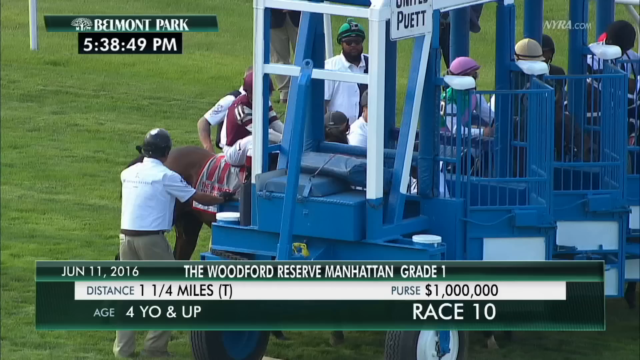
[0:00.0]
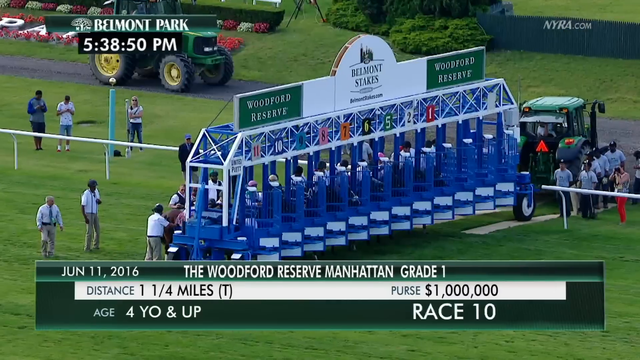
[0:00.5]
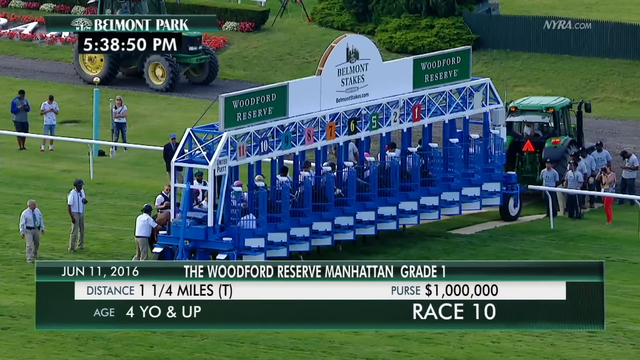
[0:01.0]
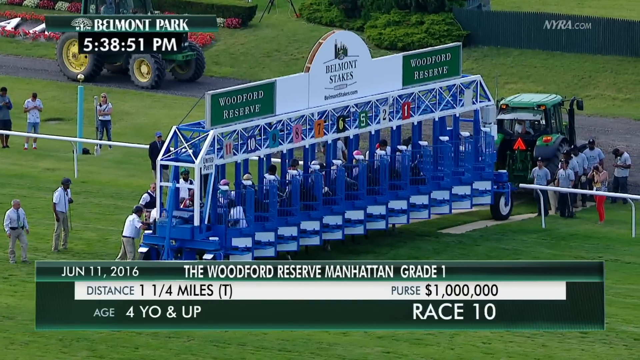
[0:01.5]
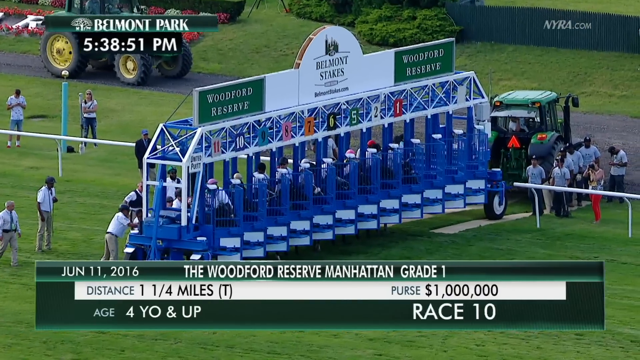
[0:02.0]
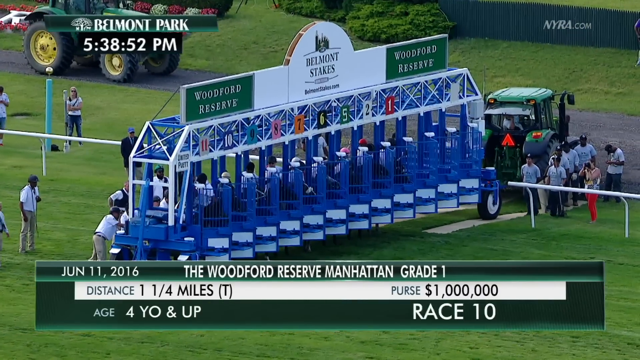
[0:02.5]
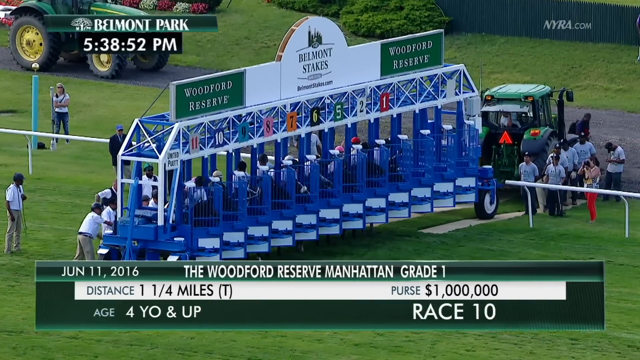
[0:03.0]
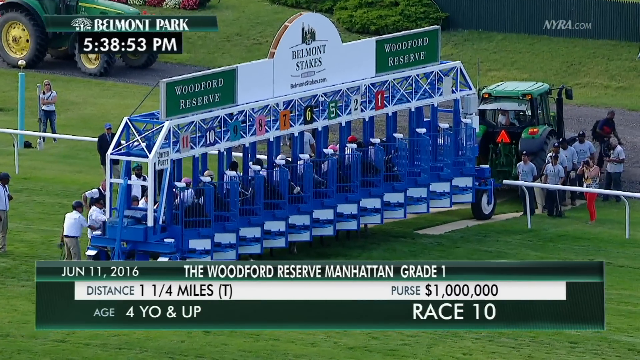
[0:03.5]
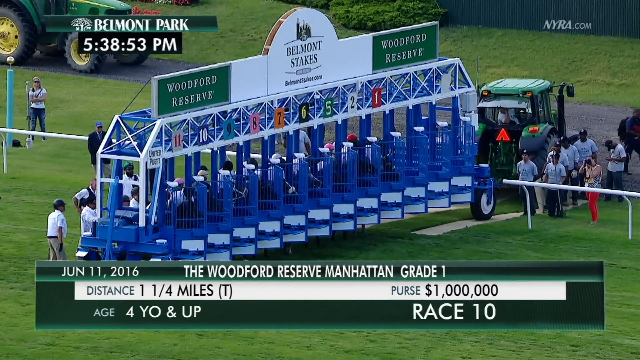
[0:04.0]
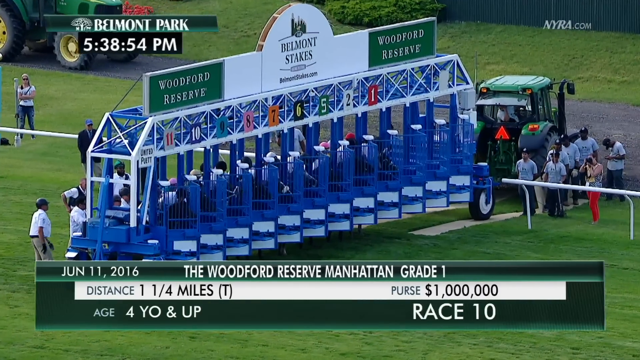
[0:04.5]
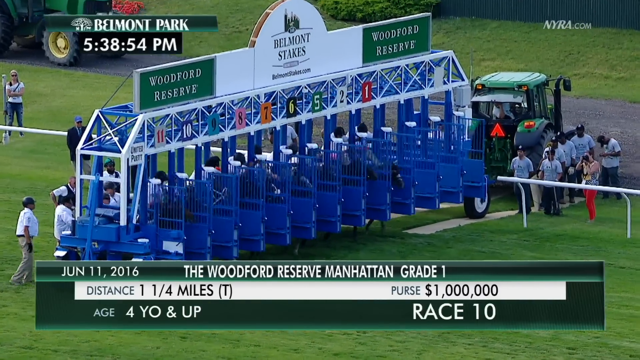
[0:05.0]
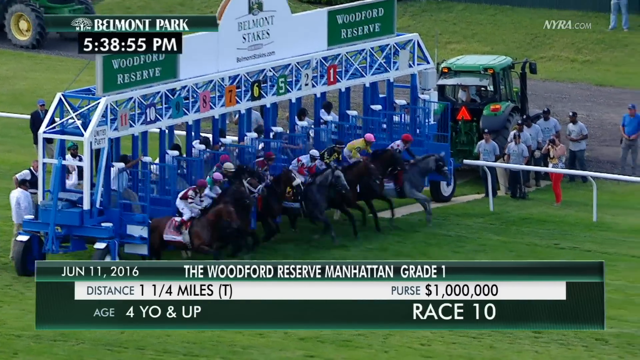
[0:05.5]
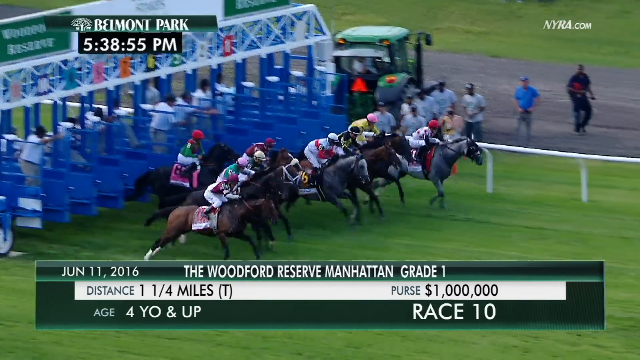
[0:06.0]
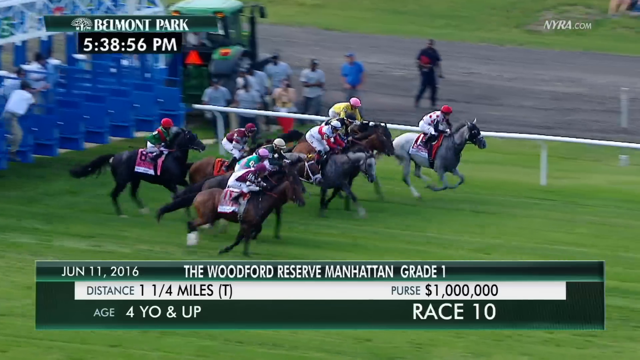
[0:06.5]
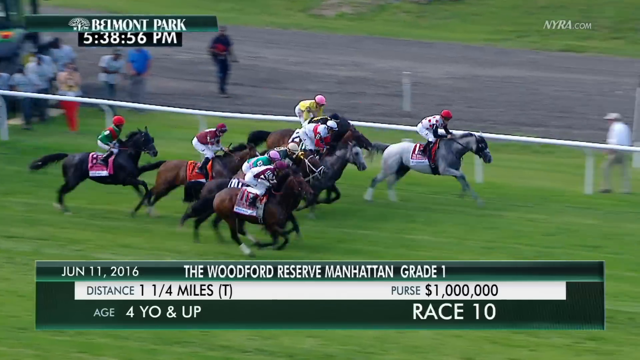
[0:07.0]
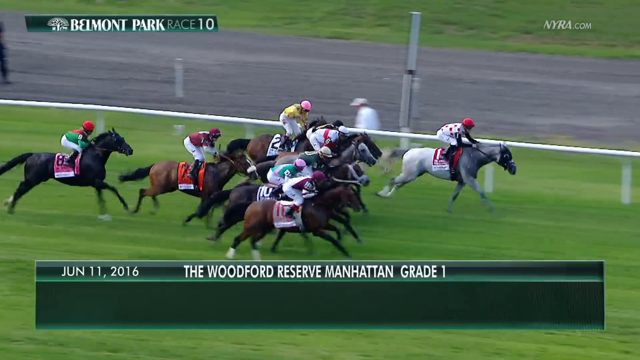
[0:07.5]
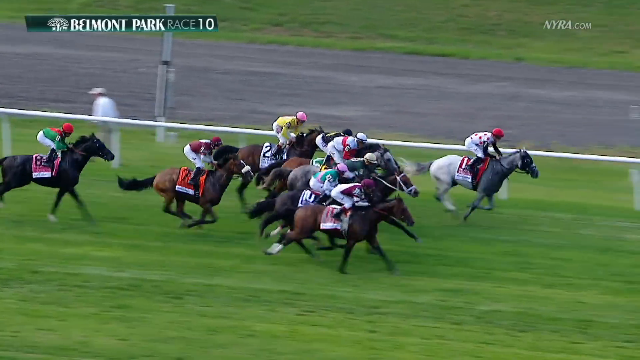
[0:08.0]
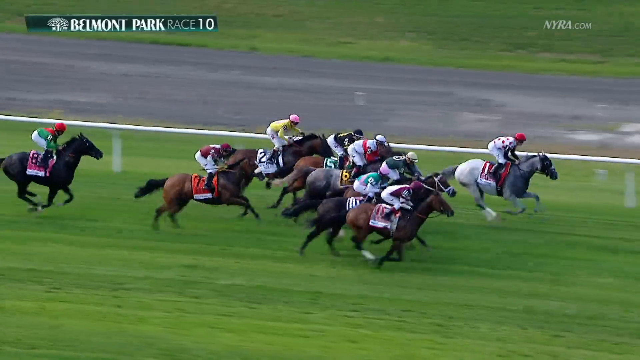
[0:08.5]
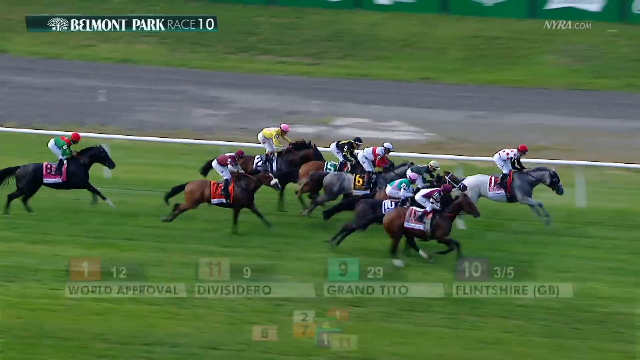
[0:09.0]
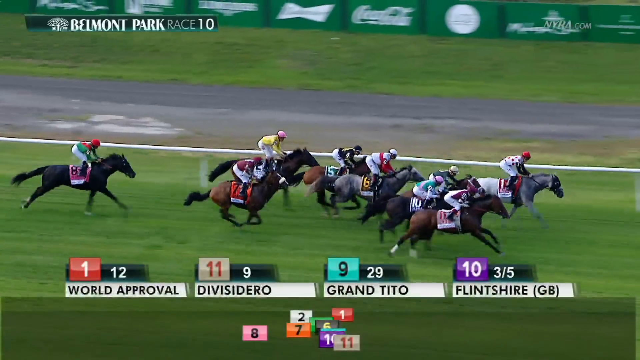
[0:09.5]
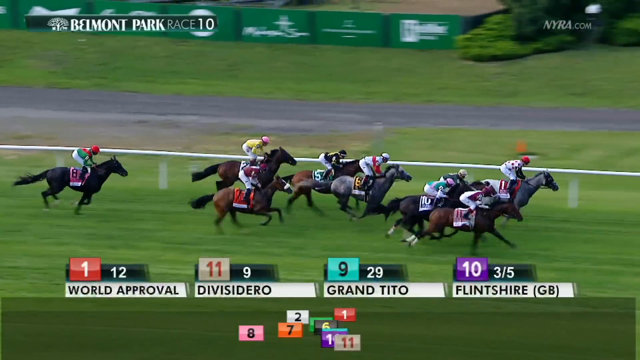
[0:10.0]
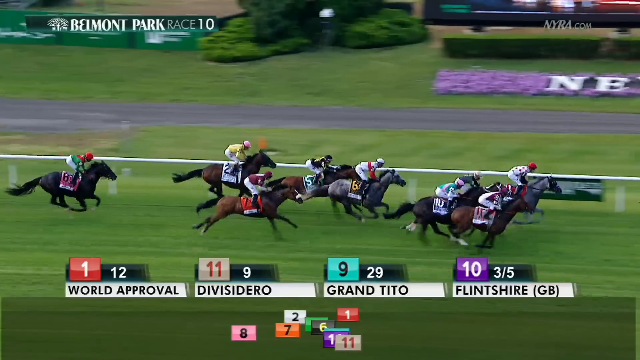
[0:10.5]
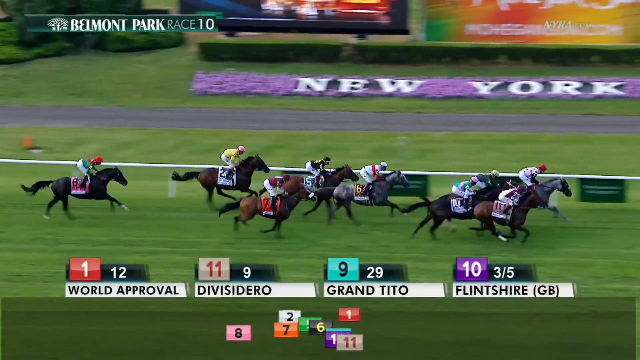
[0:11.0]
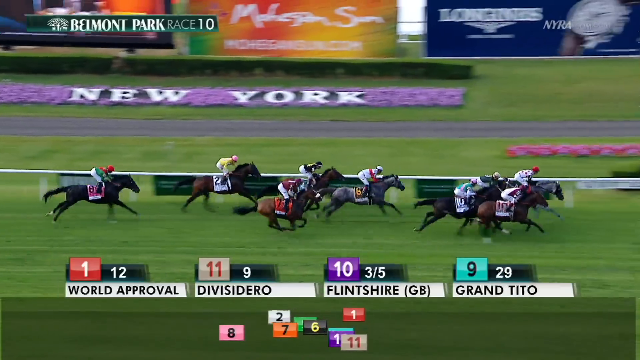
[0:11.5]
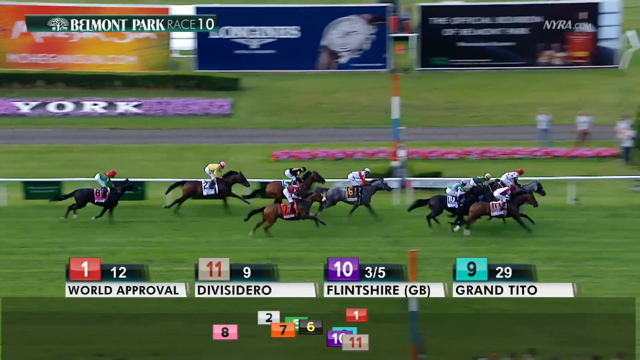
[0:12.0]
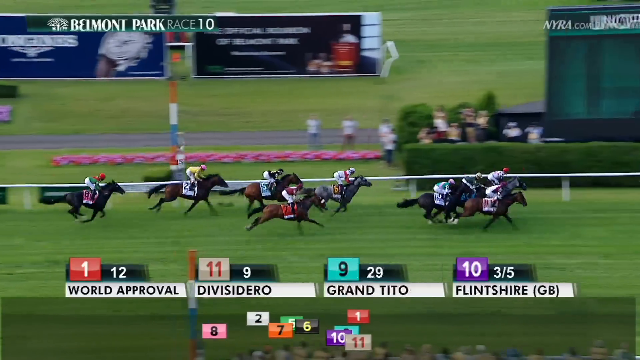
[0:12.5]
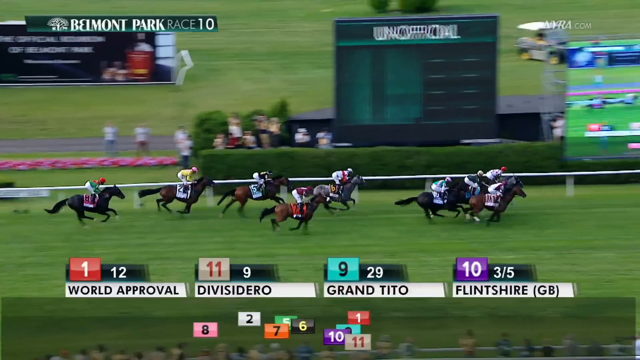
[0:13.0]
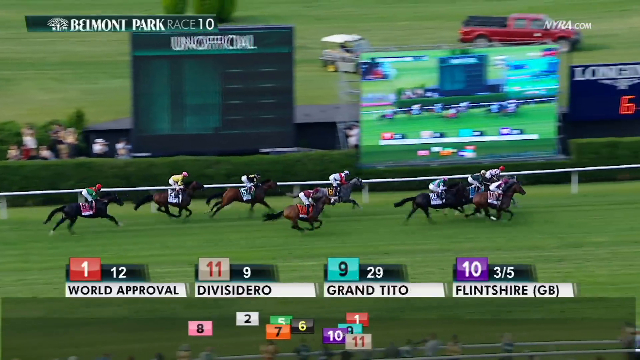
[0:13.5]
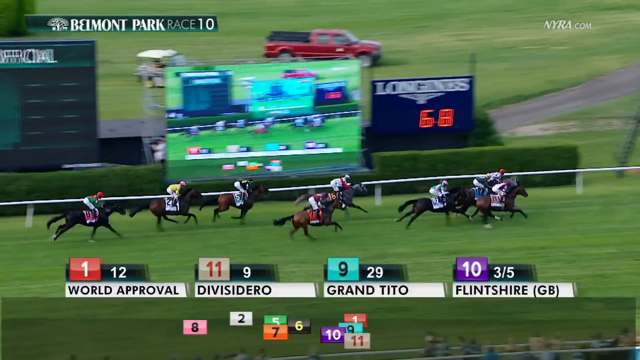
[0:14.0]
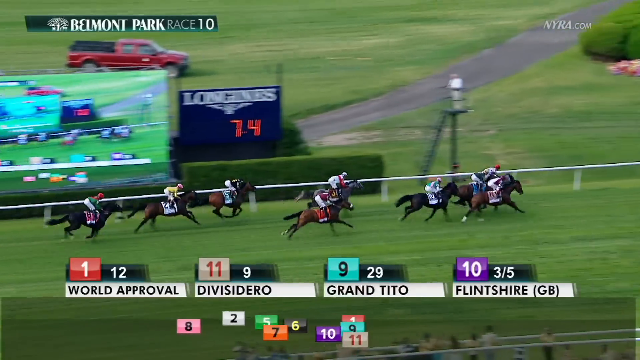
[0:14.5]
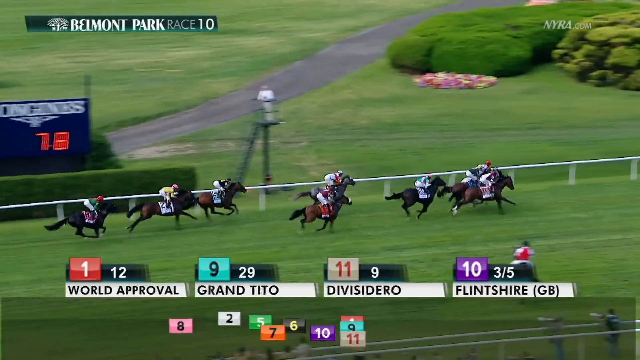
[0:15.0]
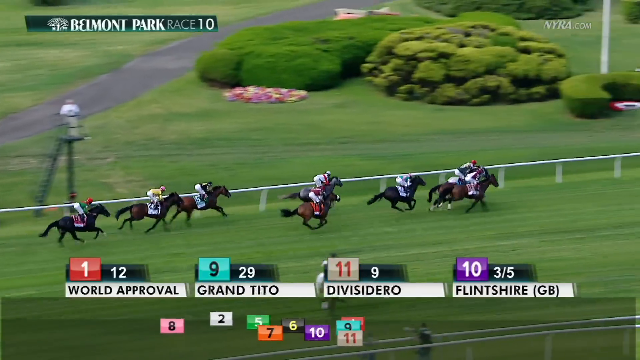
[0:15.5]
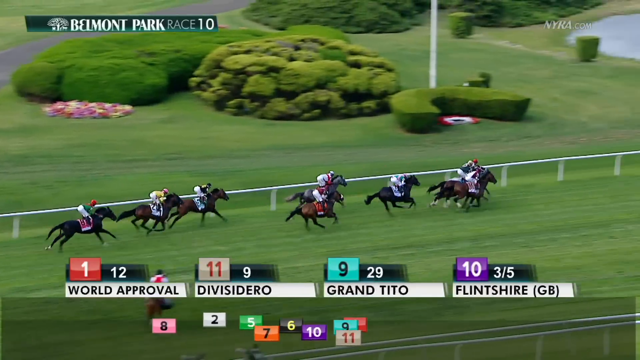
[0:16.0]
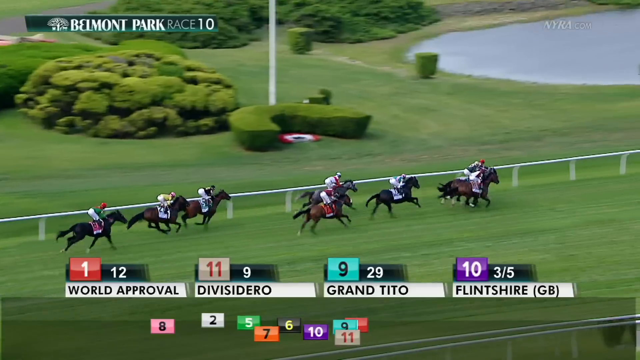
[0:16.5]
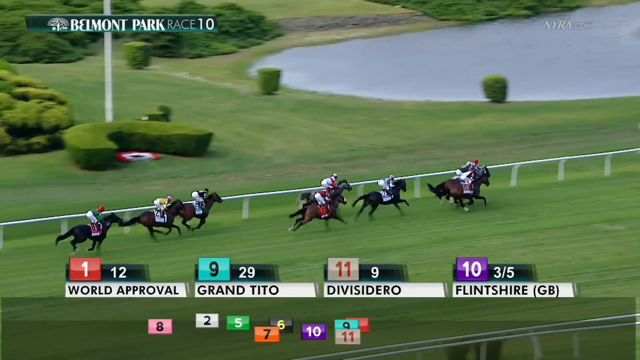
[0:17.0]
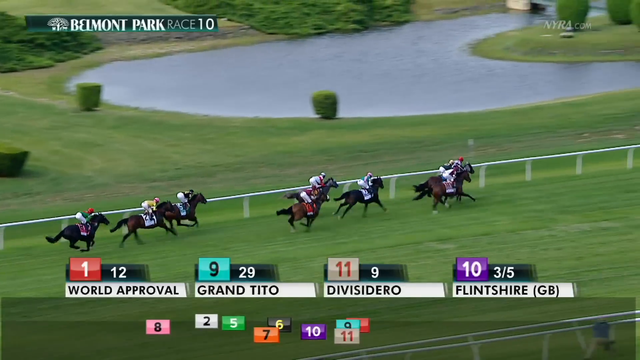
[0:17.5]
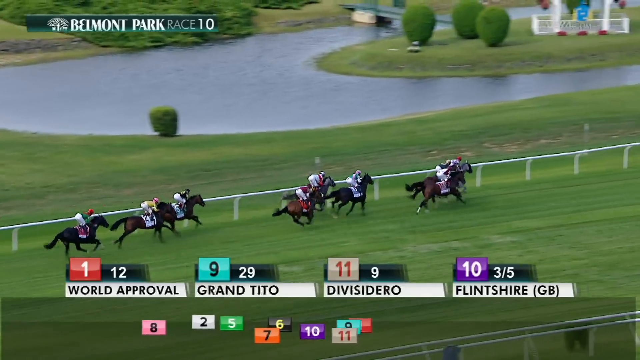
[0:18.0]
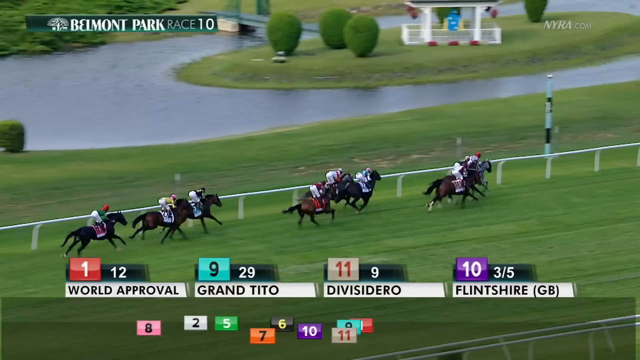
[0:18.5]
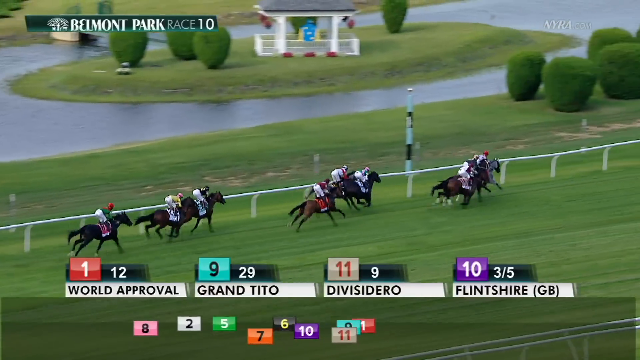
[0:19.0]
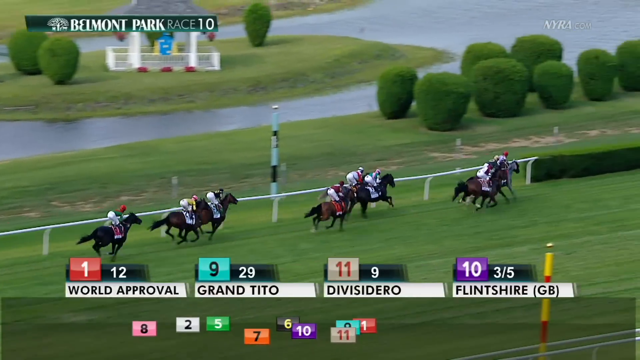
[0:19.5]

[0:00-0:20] Horses line up at Belmont Park and get into their posts. The date at the bottom reads June 11th, 2016, and on-screen text gives "the Woodford Reserve, Manhattan, grade 1", a distance of one and one-quarter miles, a purse of a million dollars, age four and up, and race 10. The horses break out of the post and race down the track. World Approval is in first; Defer-Zero is out of the 11th post and Grand Tito out of the ninth. The horses keep running down the track, which is very green, not muddy at all, with lots of grass. In the background there are advertisements on something like an LED board or panel.